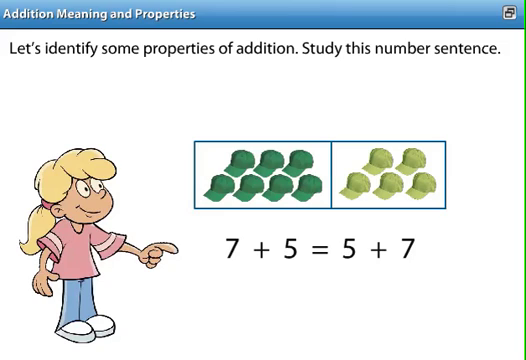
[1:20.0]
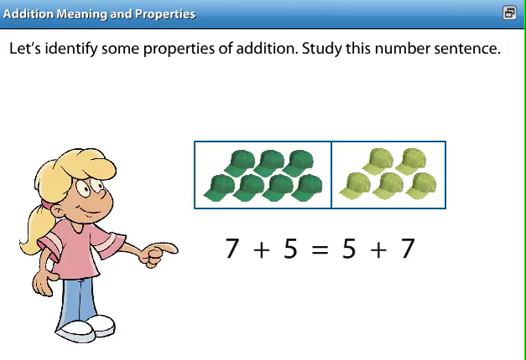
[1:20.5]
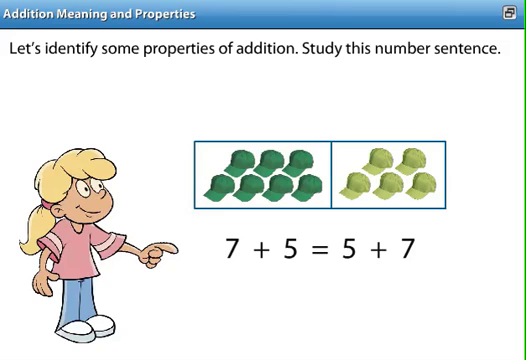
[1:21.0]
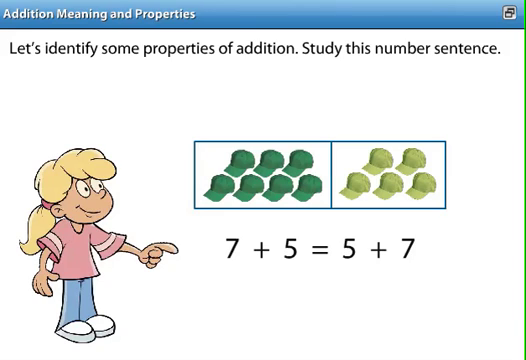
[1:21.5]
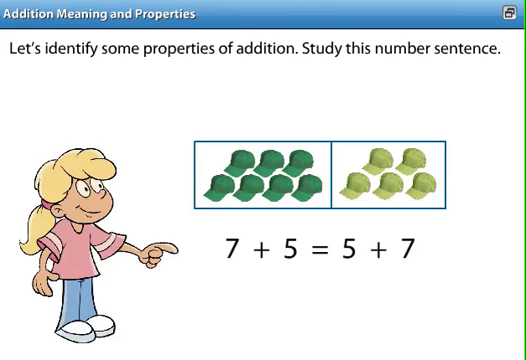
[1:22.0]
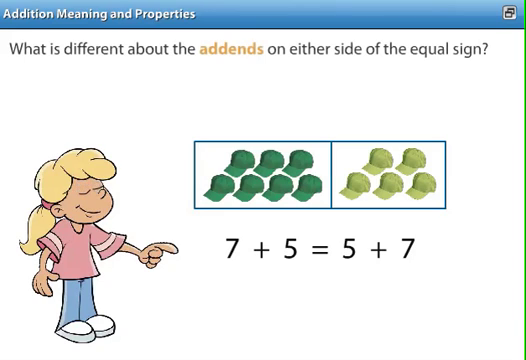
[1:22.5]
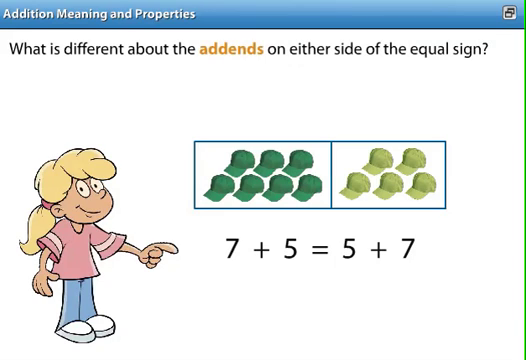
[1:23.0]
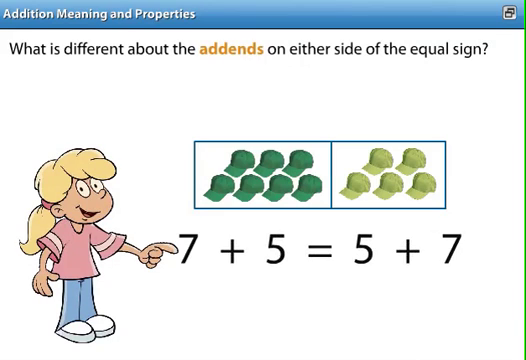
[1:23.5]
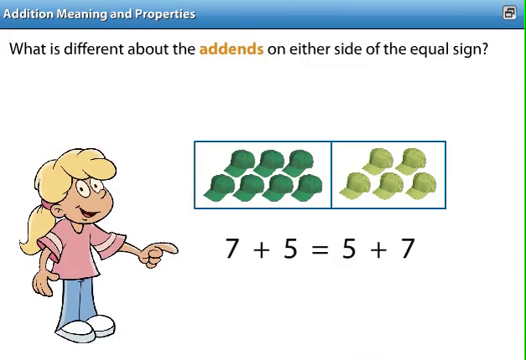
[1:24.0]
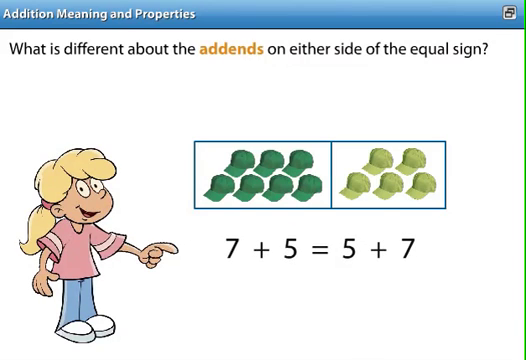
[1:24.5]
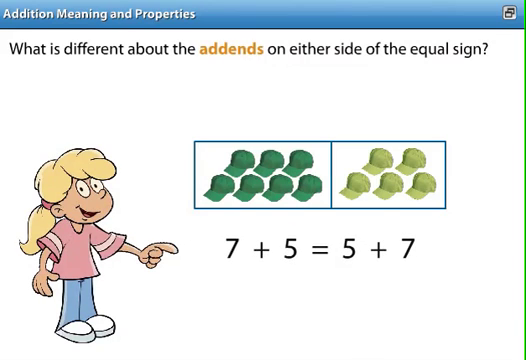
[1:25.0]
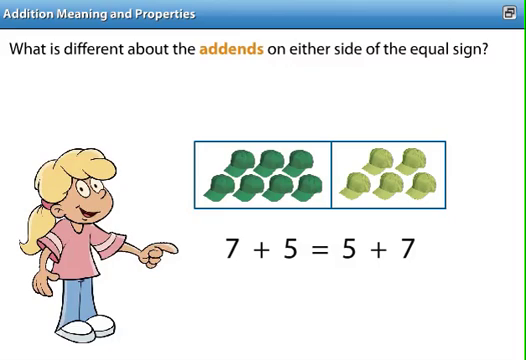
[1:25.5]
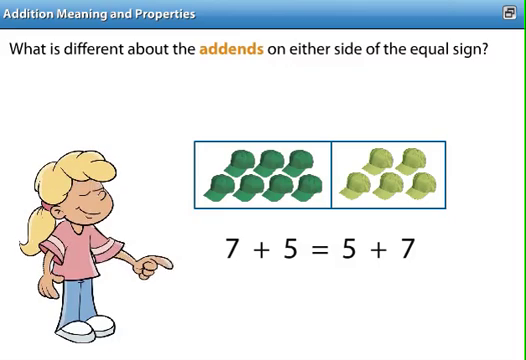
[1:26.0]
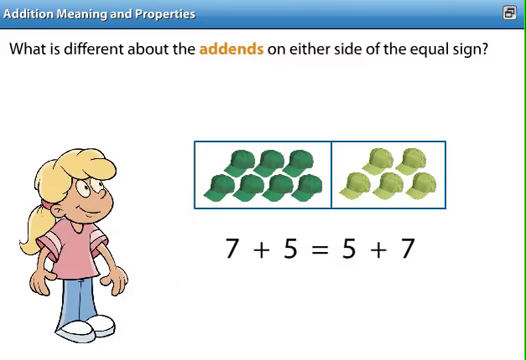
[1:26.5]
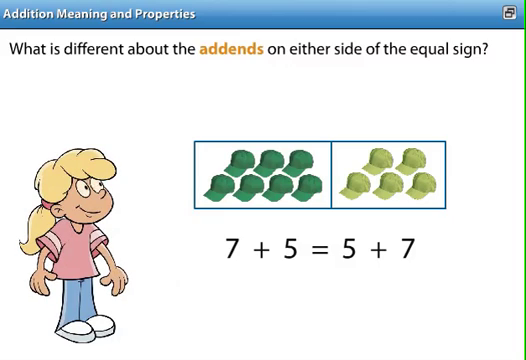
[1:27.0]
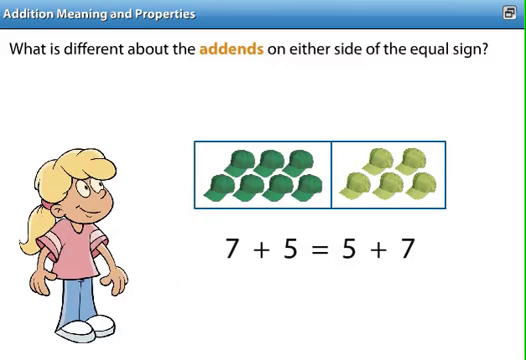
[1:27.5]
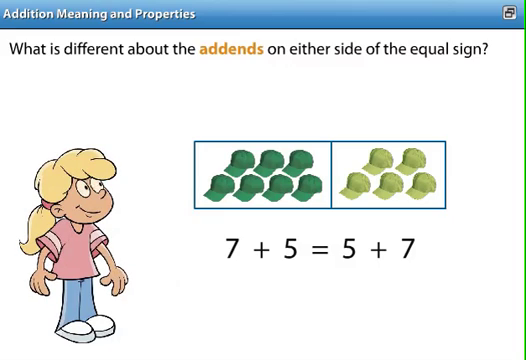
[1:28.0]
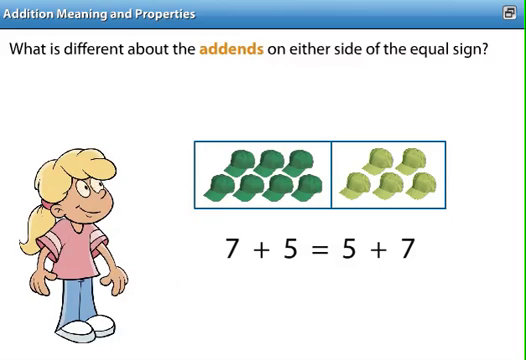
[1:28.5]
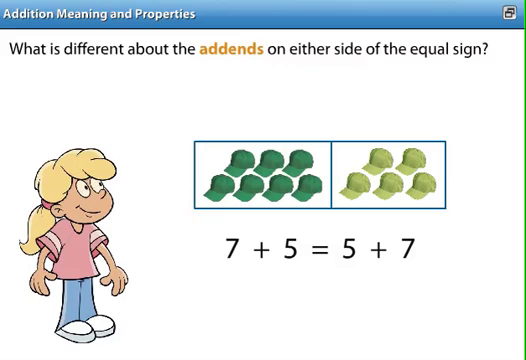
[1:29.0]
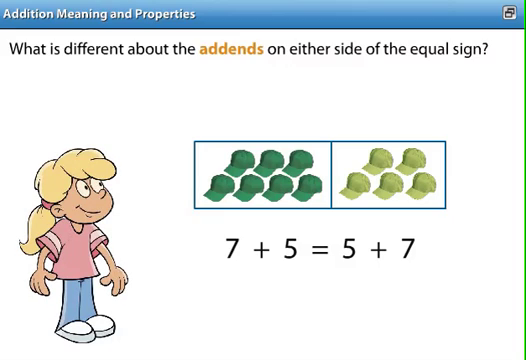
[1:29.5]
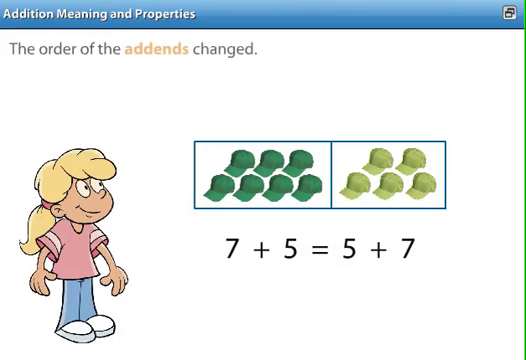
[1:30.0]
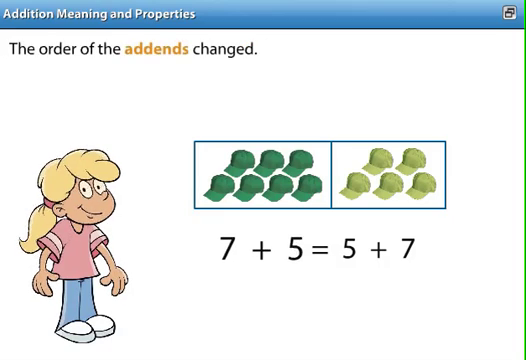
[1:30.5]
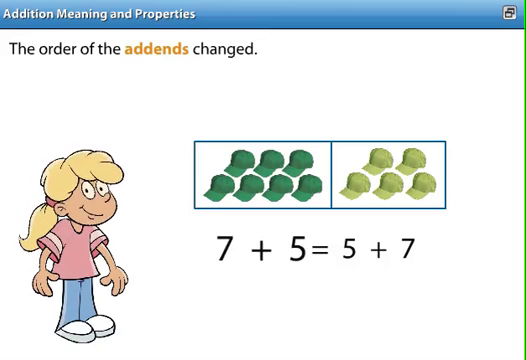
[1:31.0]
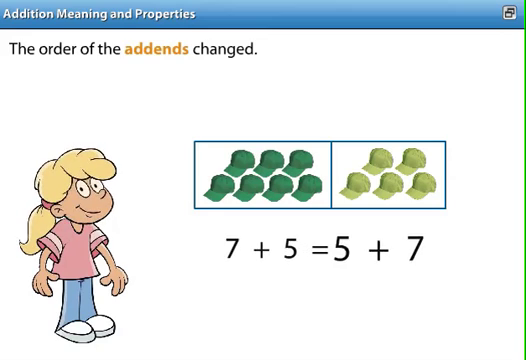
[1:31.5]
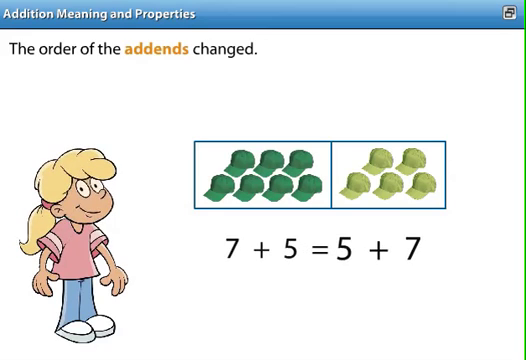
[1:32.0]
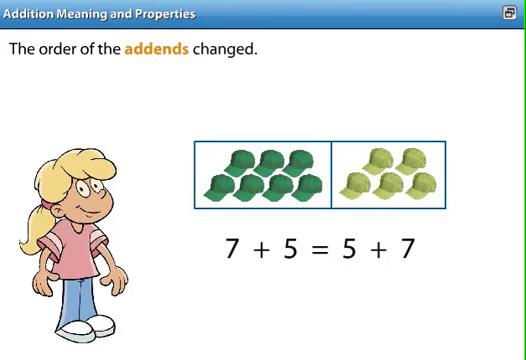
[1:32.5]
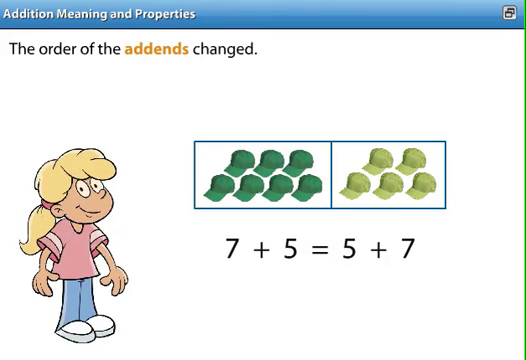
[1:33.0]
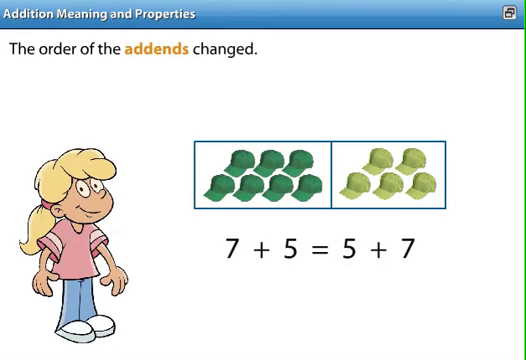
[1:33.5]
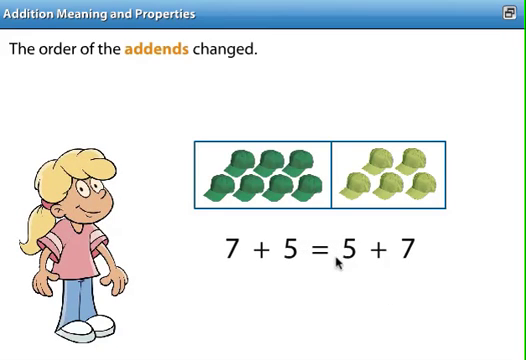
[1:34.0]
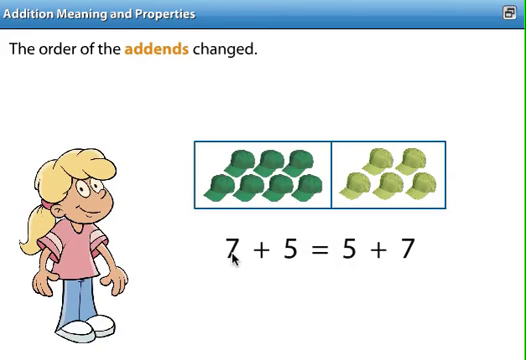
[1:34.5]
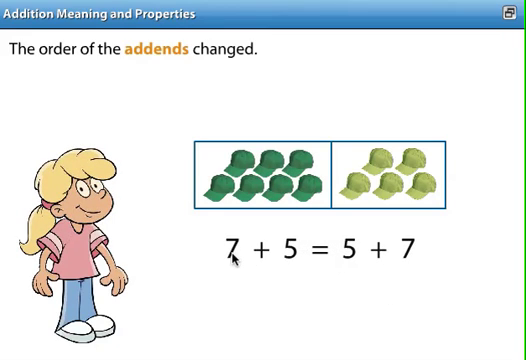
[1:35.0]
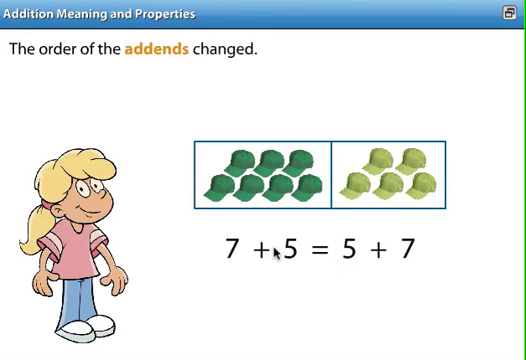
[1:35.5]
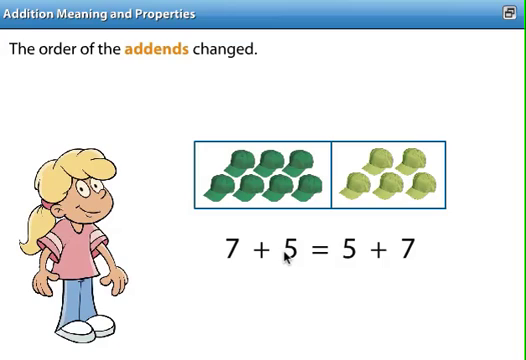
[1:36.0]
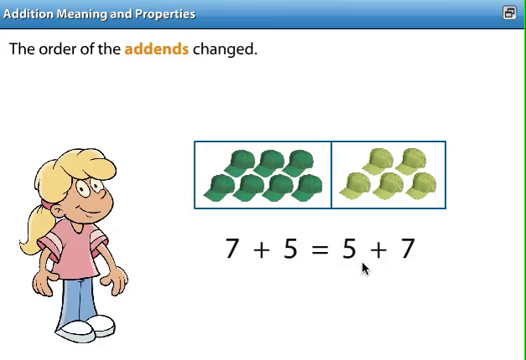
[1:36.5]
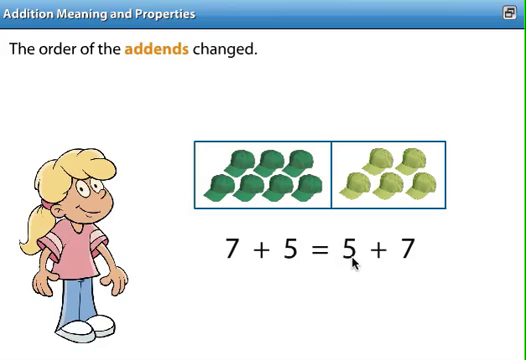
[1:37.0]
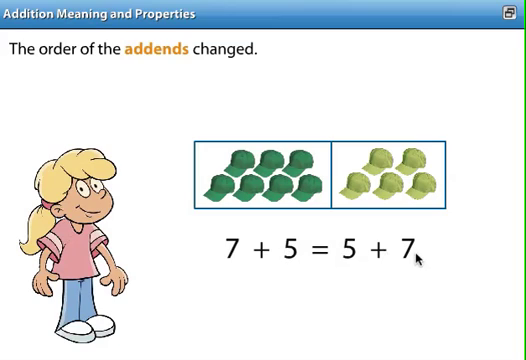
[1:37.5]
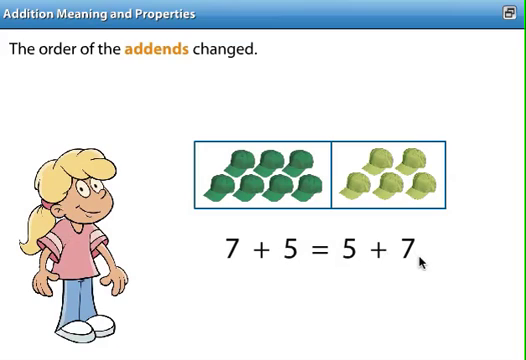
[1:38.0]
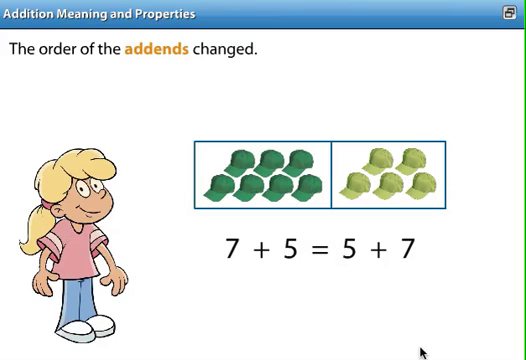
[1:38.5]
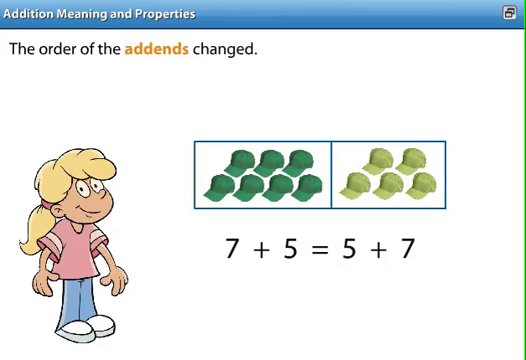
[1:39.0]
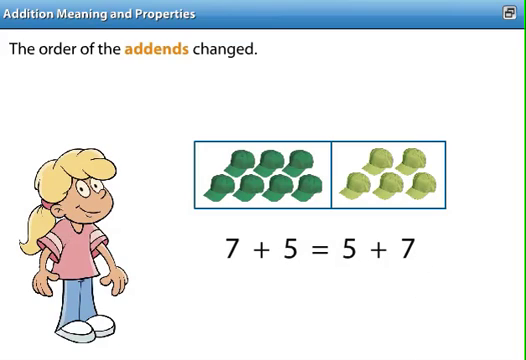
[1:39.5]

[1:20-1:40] The writing at the top changes to "what is different about the addends on either side of the equal sign." The cartoon character shows what appears to be surprise, her eyes wide open while still smiling, and the equation beneath the rectangles of hats pops out and expands quickly to attract attention. After a pause, the top writing changes to "the order of the addends changed," and each number in the equation pops out and back into place one by one. The mouse cursor moves one by one over the four numbers in the equation. The expressive cartoon character remains visible in the lower left-hand corner.